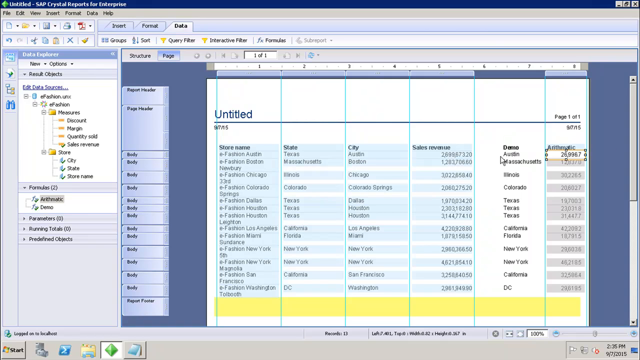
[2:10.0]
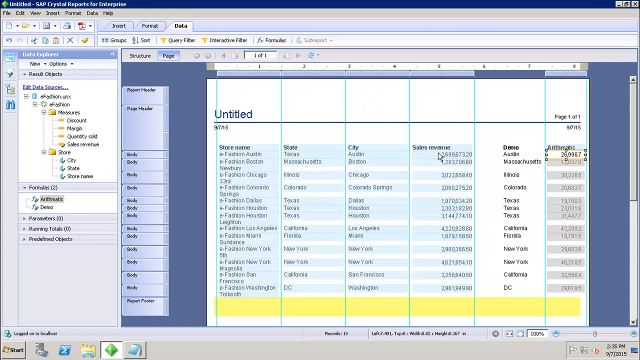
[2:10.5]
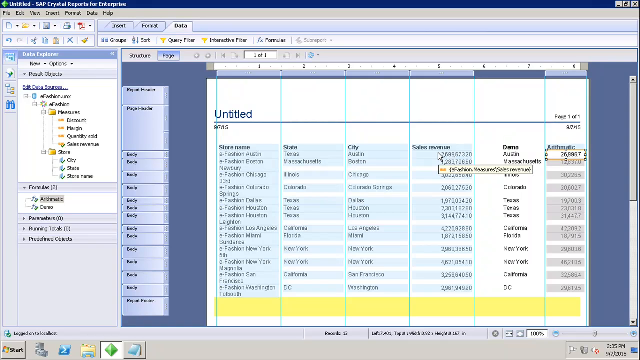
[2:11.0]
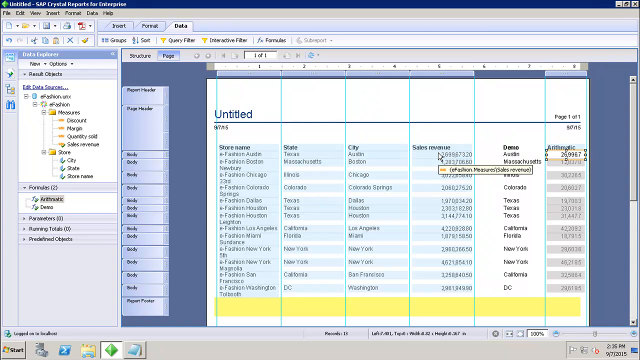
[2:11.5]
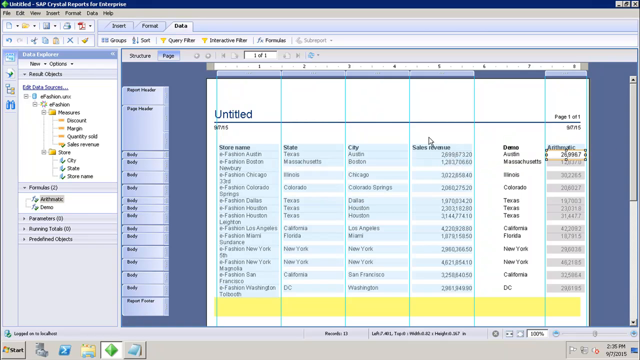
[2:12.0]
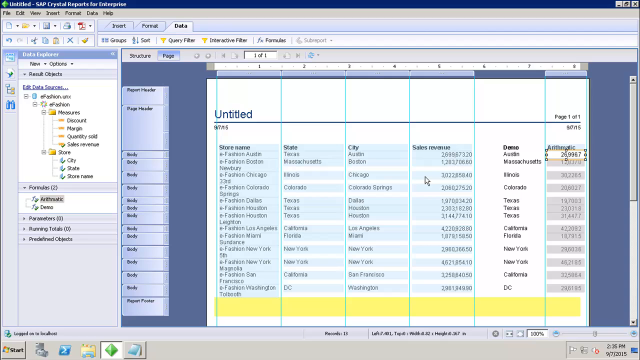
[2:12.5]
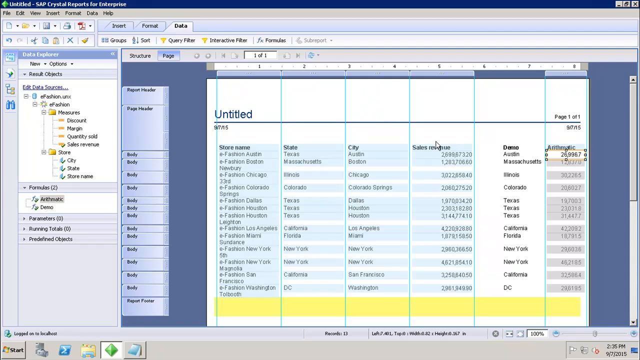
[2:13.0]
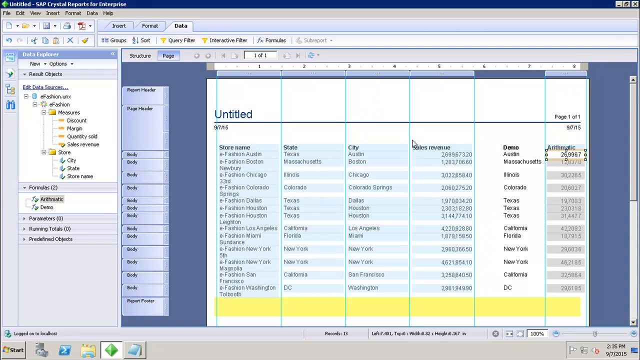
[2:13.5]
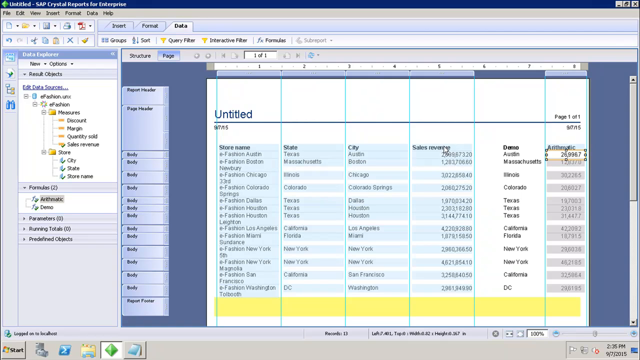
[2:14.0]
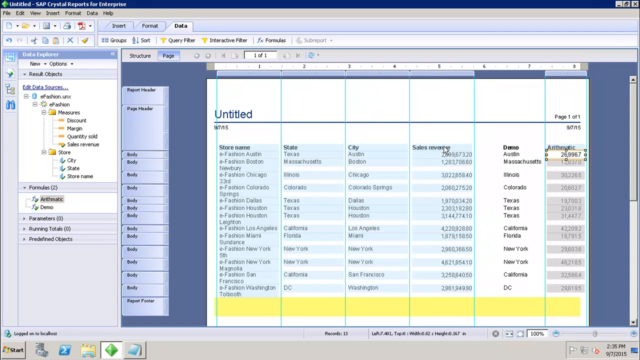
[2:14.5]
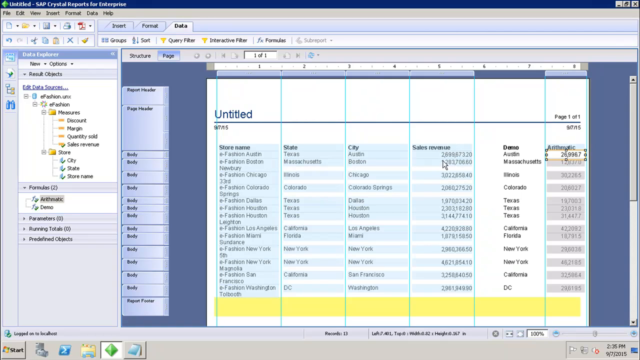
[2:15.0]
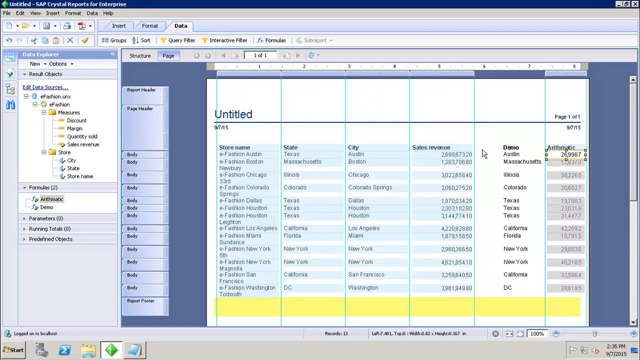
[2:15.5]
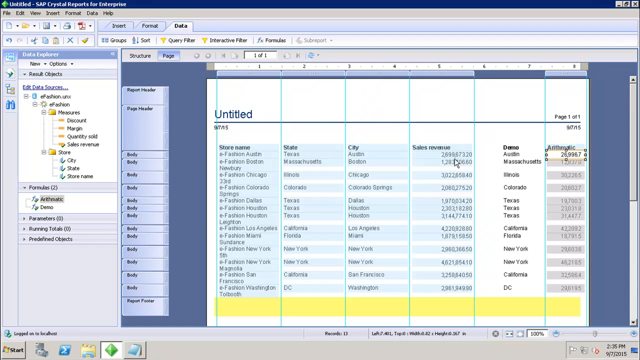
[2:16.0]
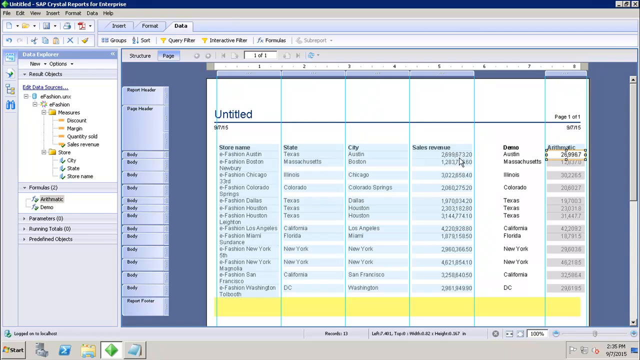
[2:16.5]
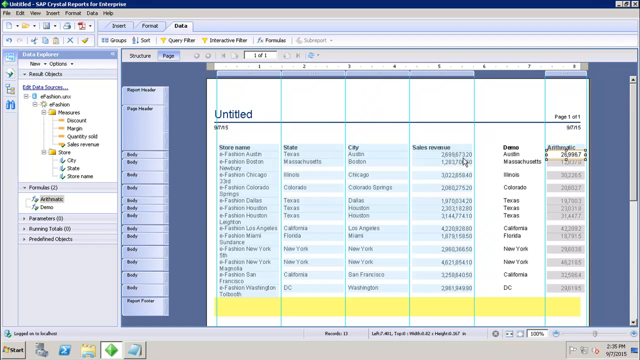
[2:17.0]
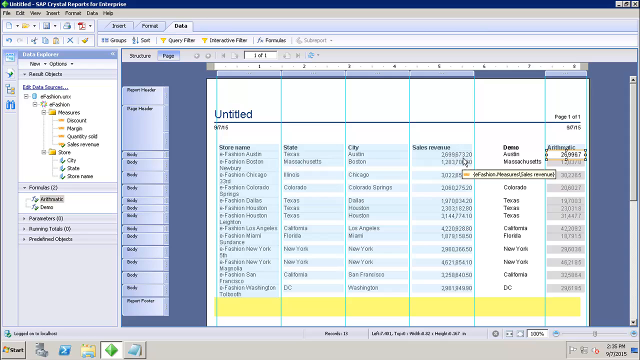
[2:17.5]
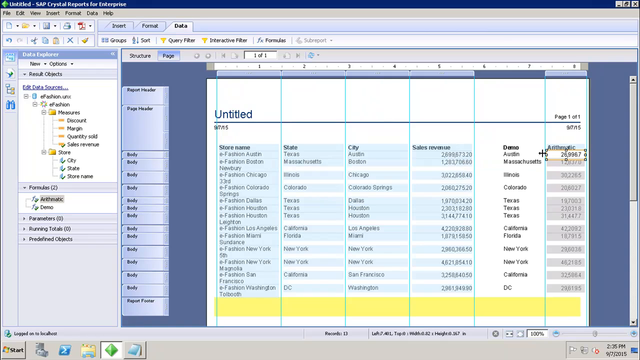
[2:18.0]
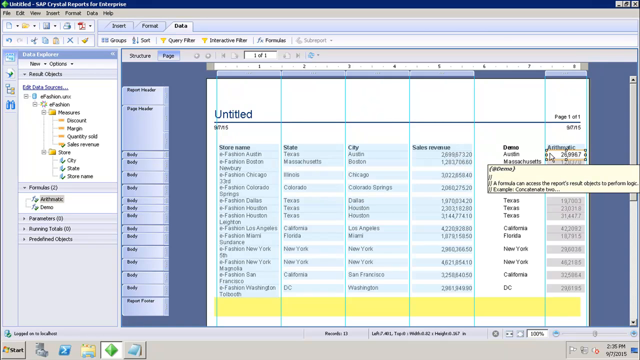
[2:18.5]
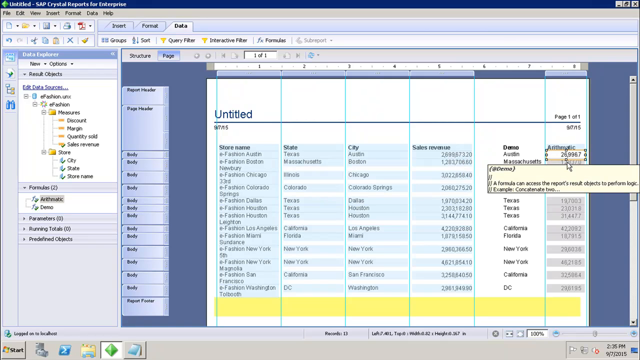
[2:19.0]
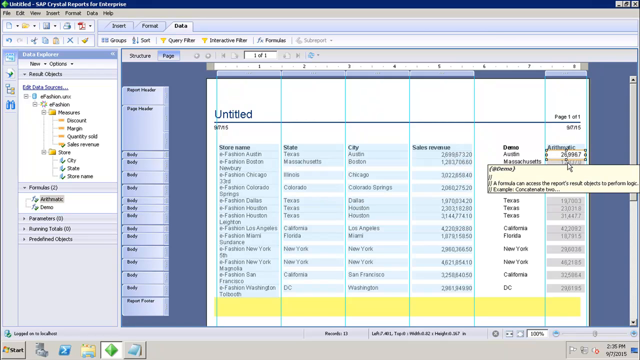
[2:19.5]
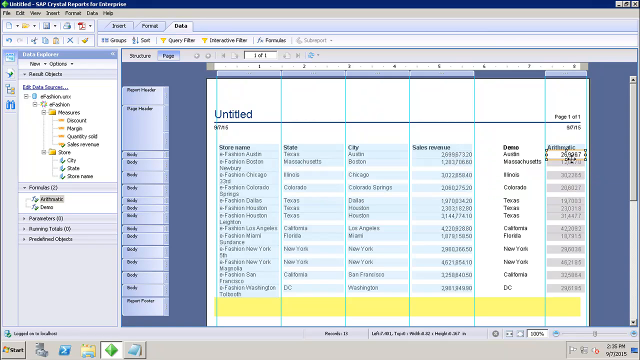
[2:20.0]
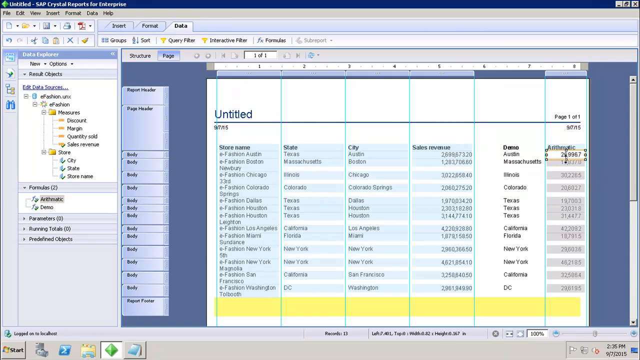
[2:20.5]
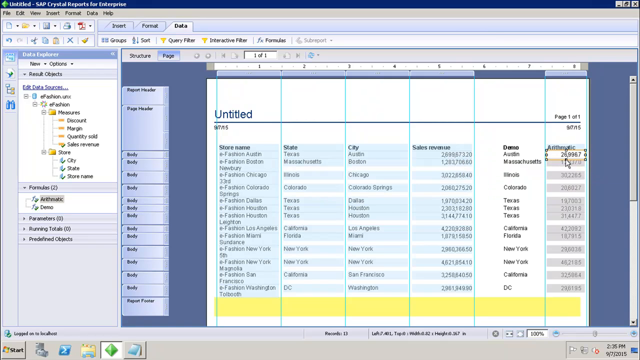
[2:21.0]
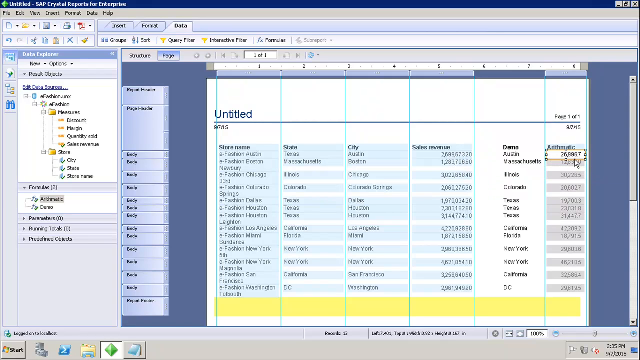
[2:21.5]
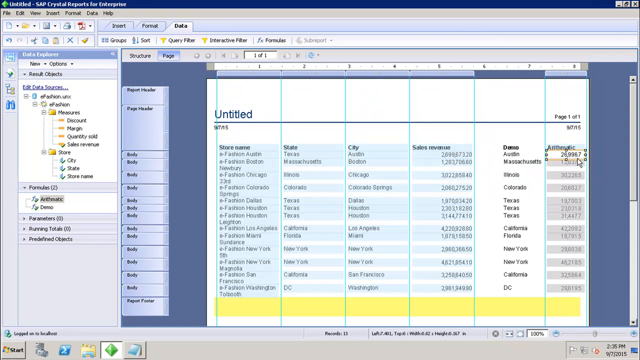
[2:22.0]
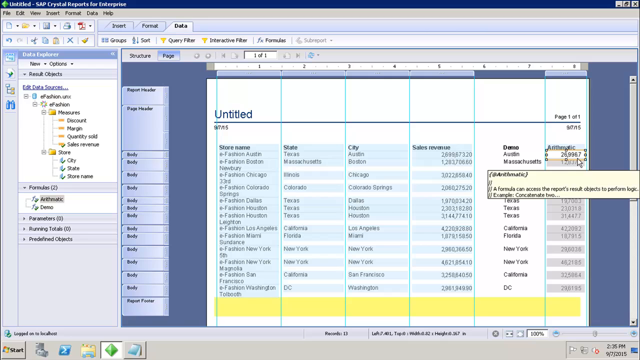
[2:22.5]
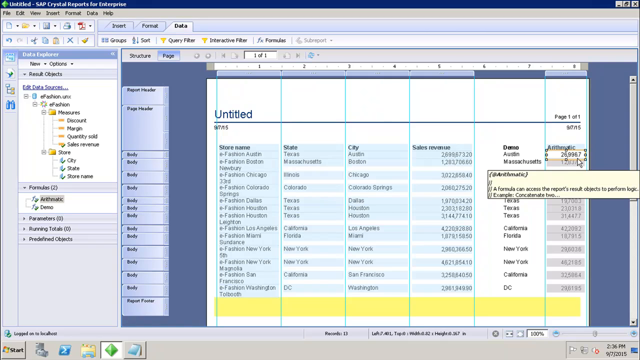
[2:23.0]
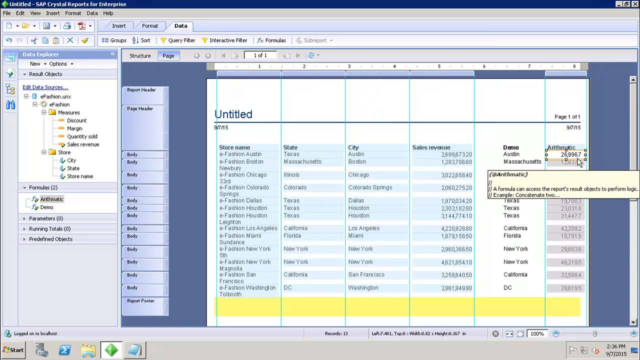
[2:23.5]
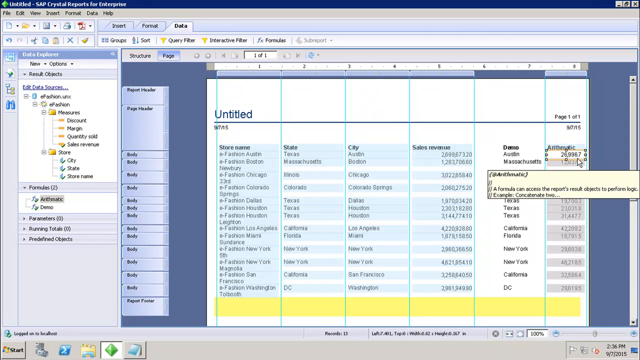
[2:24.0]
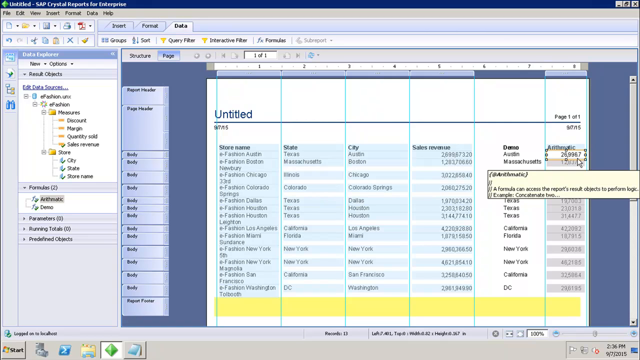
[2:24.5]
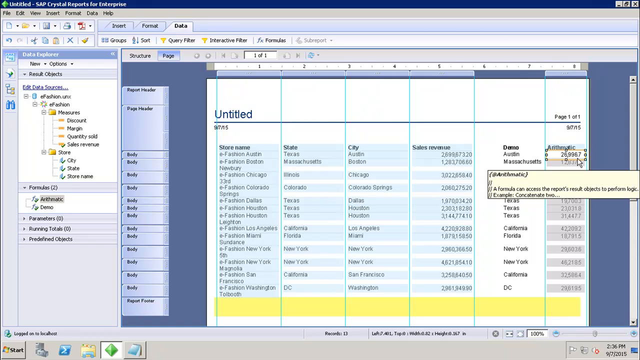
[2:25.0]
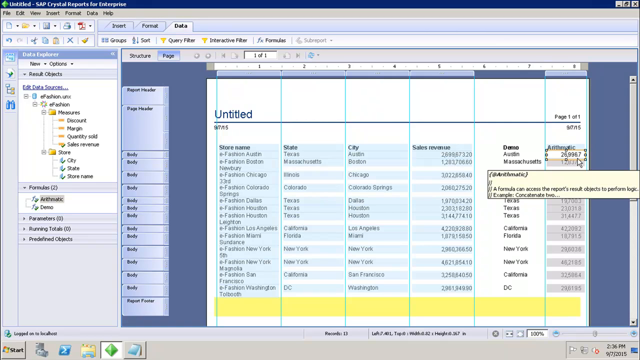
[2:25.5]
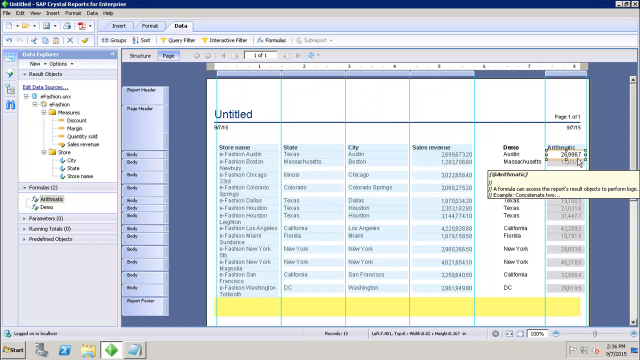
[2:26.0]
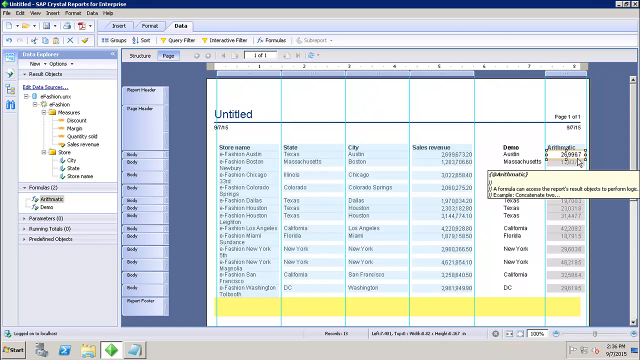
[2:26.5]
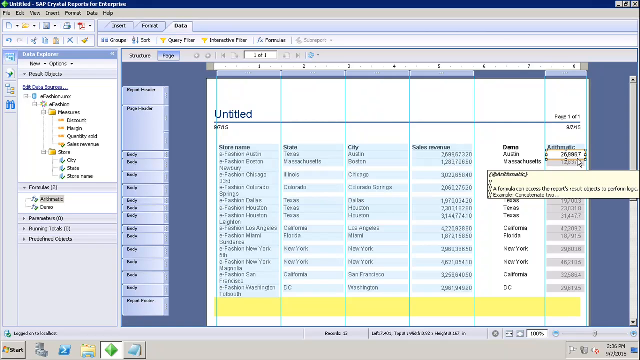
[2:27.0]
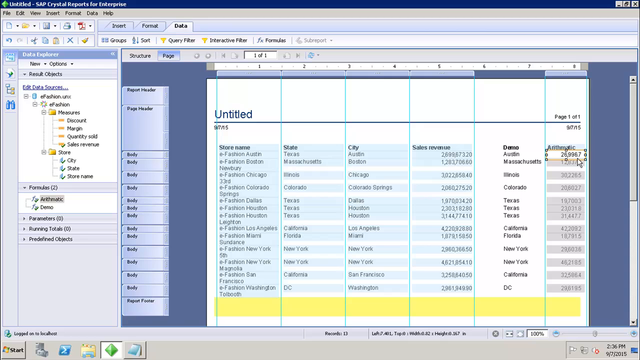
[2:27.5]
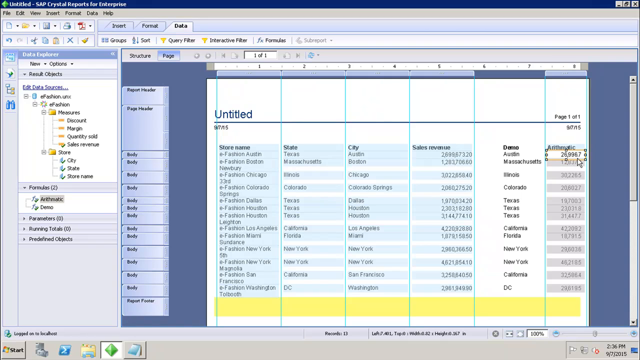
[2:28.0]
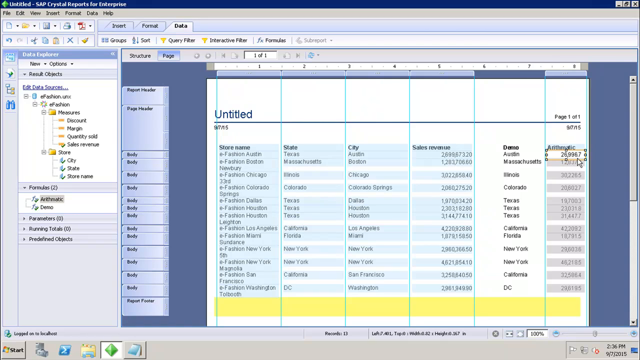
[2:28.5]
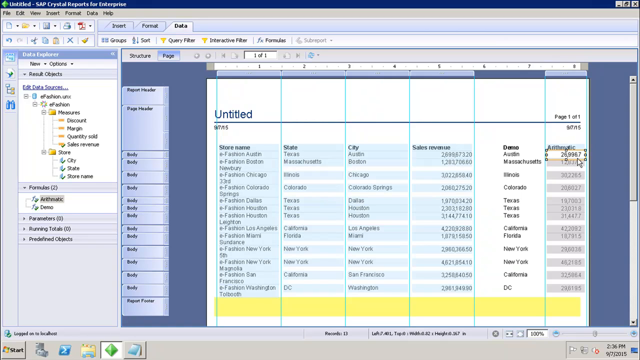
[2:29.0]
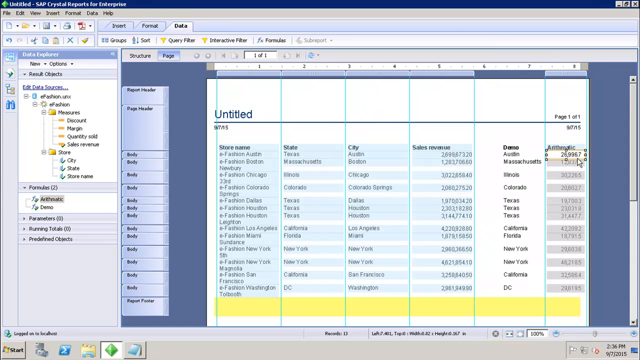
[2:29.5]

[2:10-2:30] Aquamarine lines run down vertically. The person has the cursor on the arithmetic section and appears to have added another column. The mouse circles in the sales revenue section, then moves from the sales revenue section to the arithmetic column in the same row.